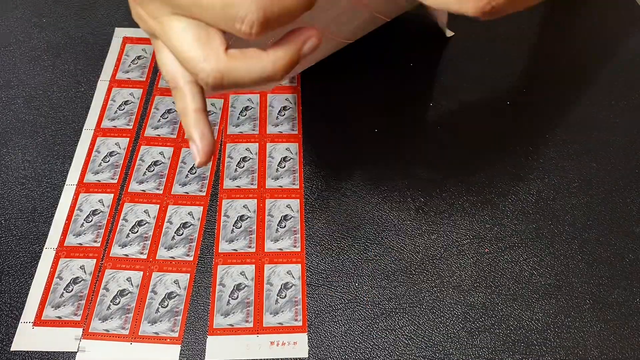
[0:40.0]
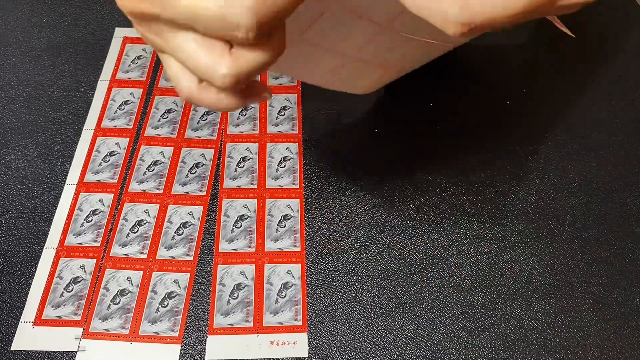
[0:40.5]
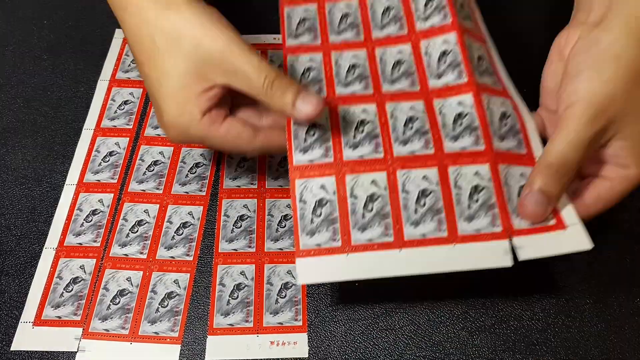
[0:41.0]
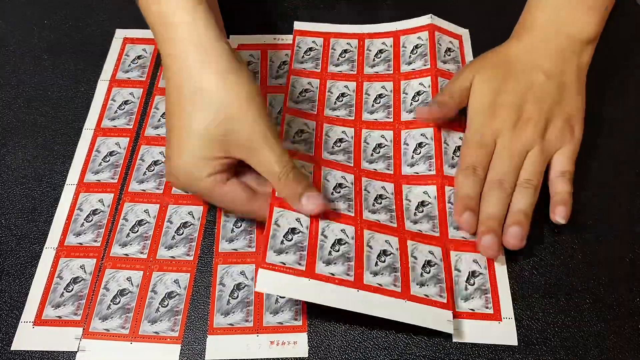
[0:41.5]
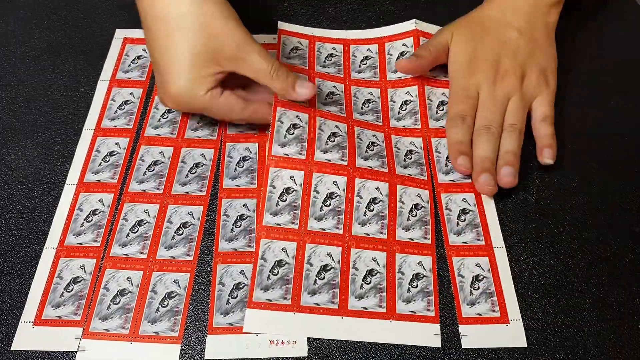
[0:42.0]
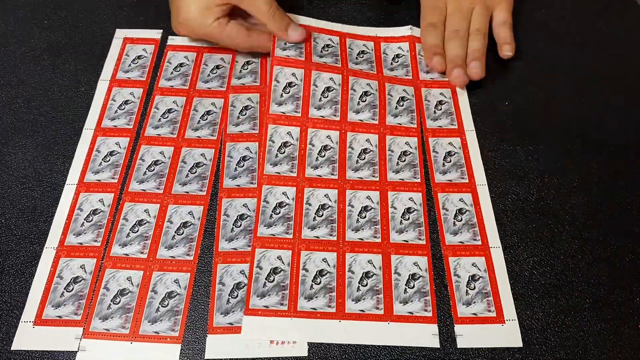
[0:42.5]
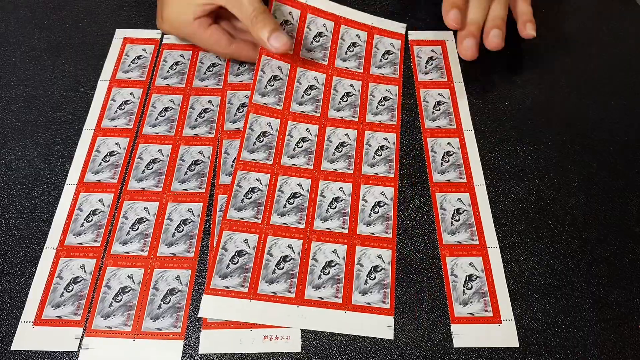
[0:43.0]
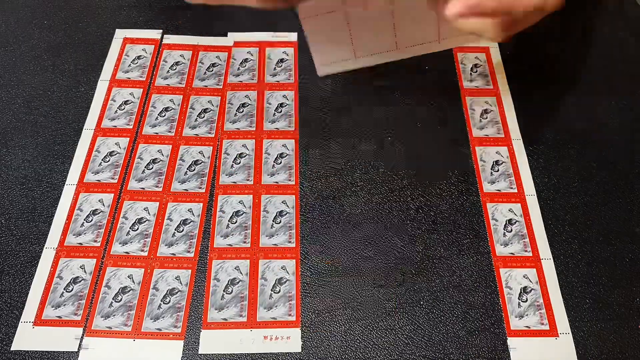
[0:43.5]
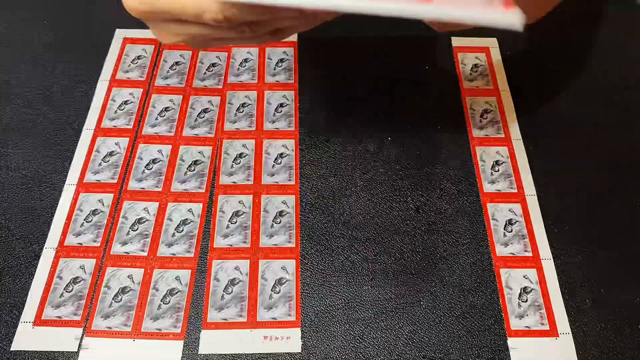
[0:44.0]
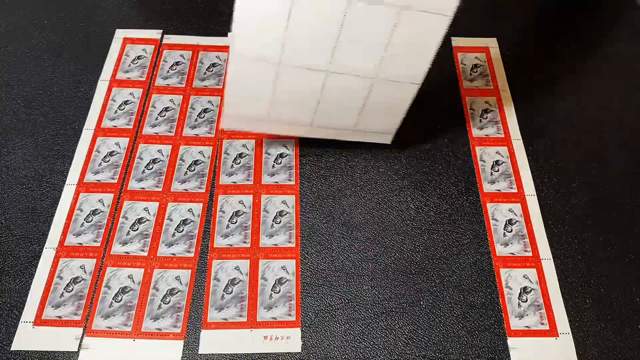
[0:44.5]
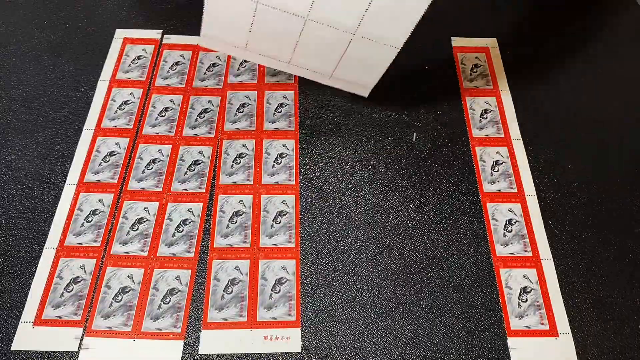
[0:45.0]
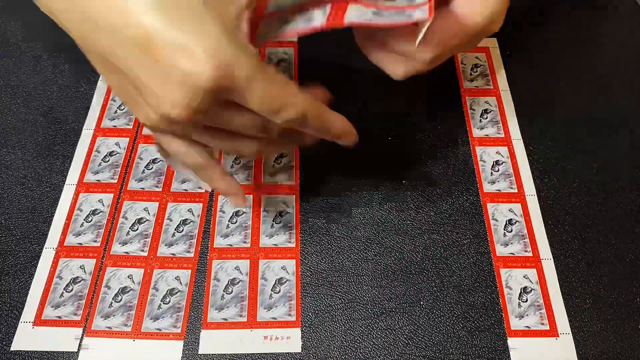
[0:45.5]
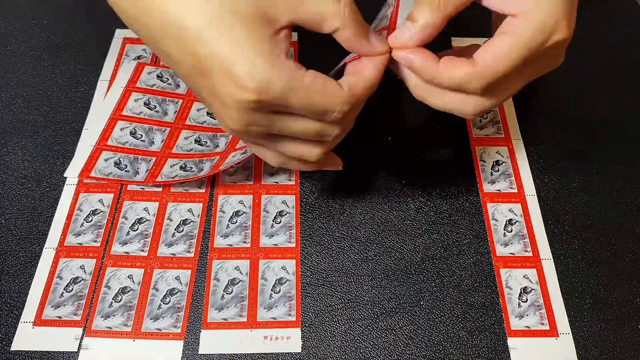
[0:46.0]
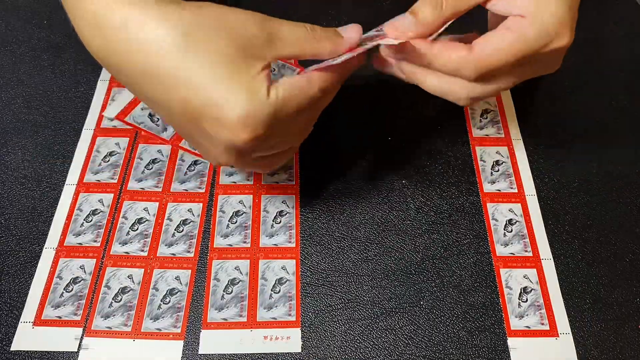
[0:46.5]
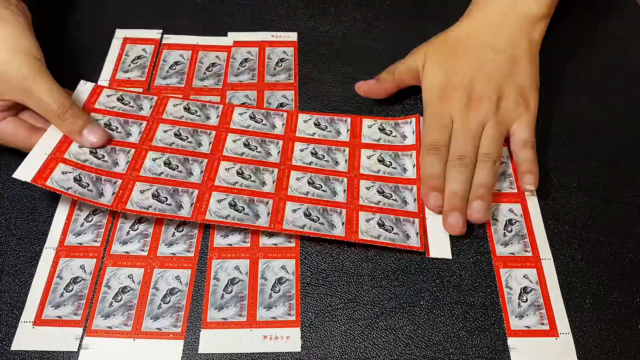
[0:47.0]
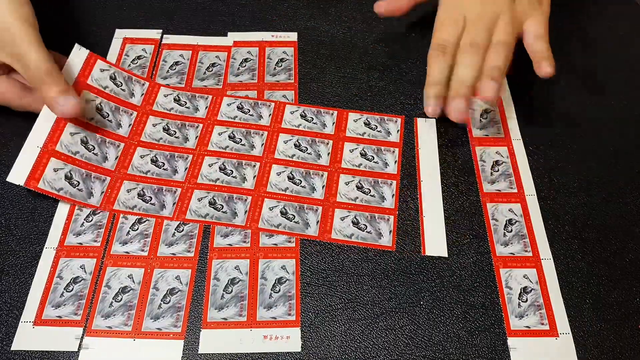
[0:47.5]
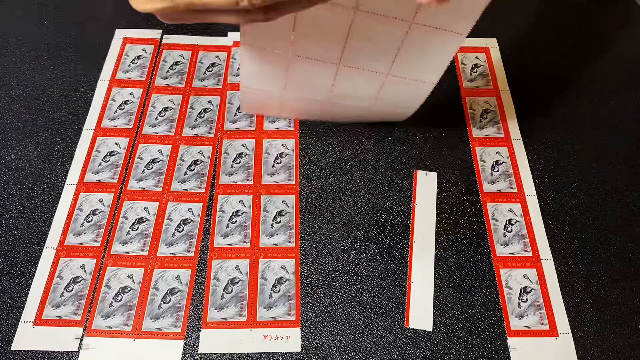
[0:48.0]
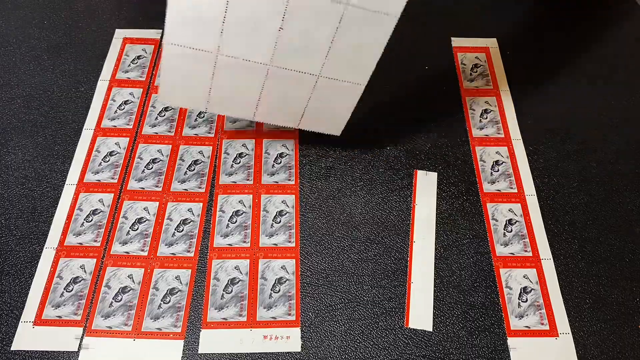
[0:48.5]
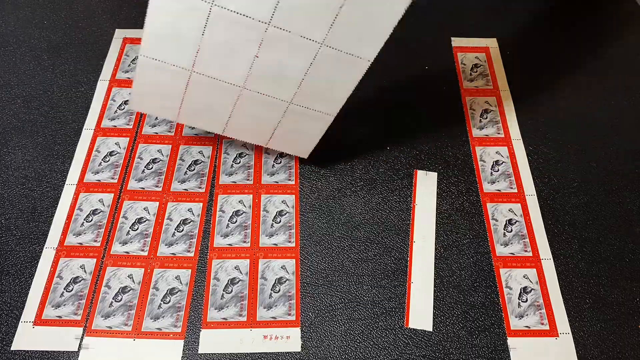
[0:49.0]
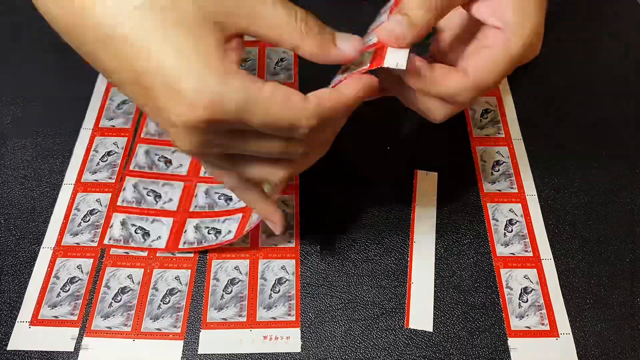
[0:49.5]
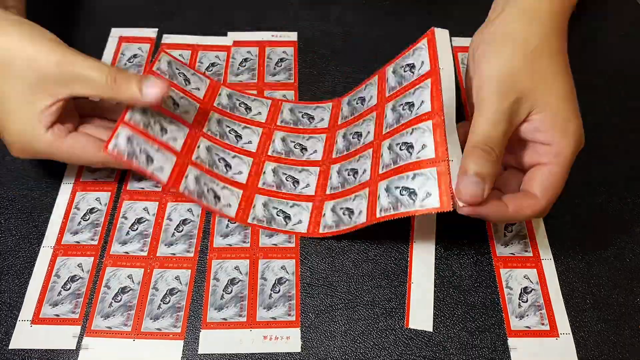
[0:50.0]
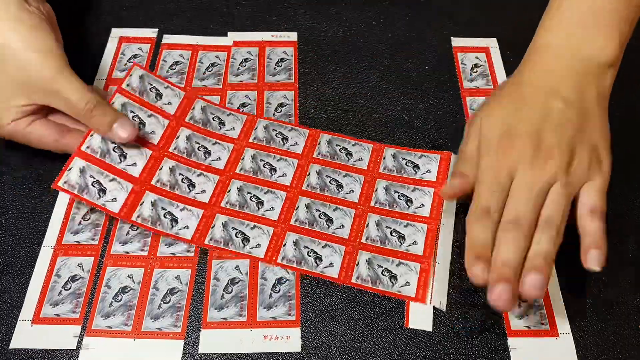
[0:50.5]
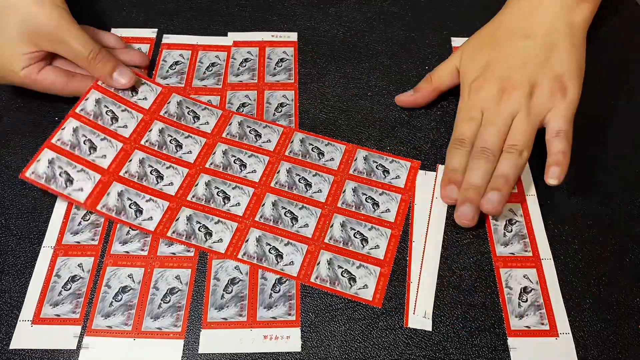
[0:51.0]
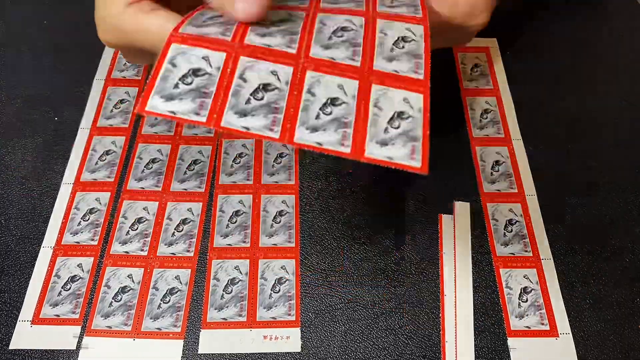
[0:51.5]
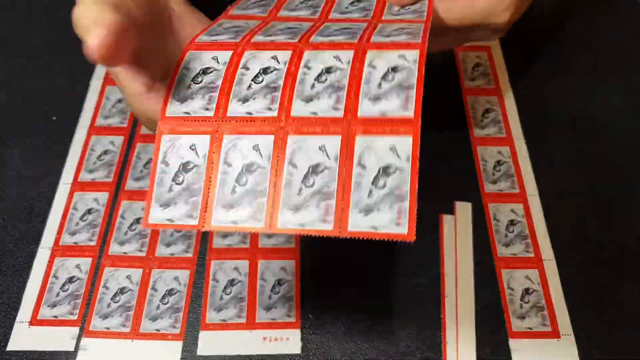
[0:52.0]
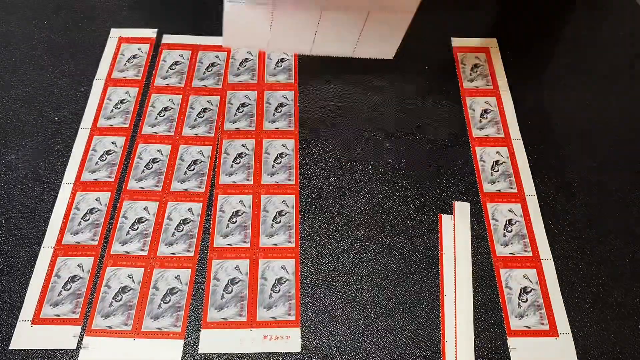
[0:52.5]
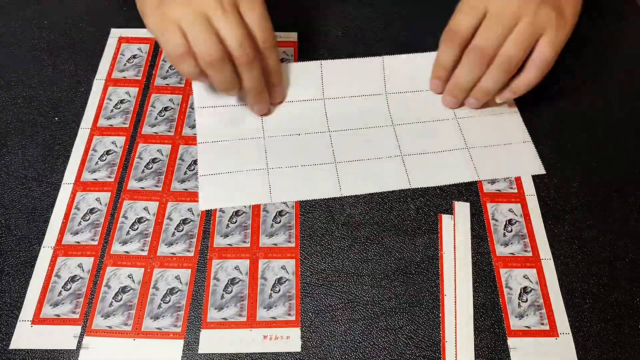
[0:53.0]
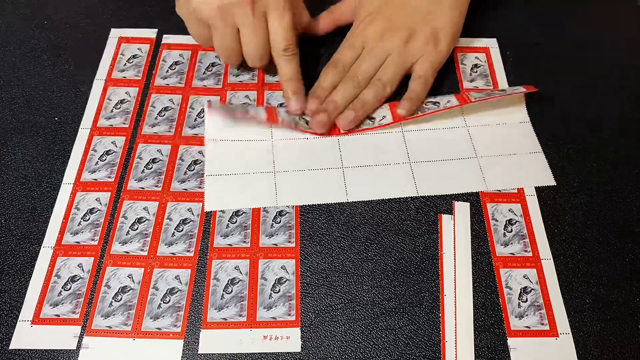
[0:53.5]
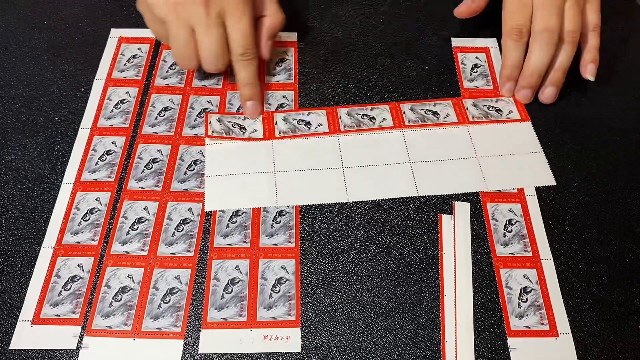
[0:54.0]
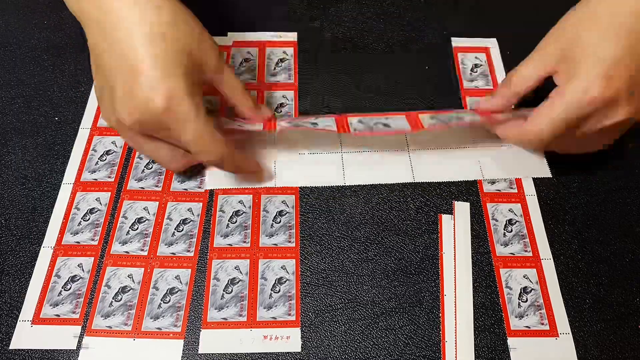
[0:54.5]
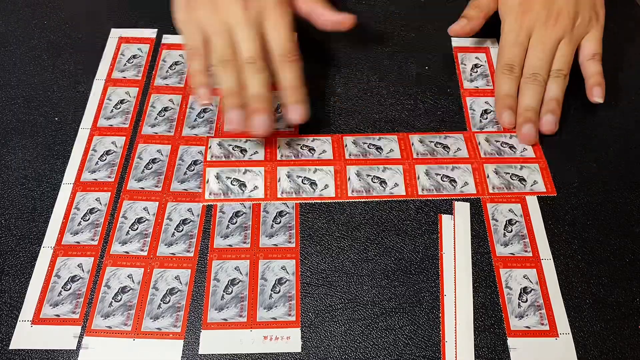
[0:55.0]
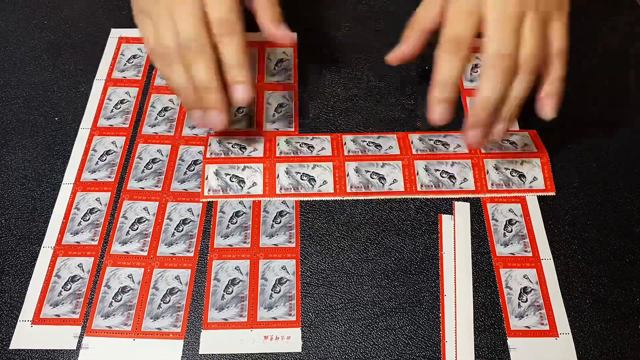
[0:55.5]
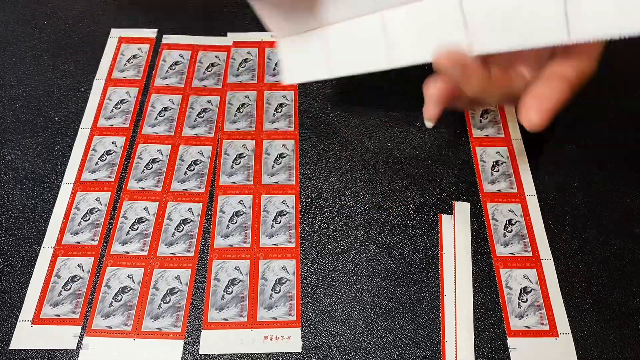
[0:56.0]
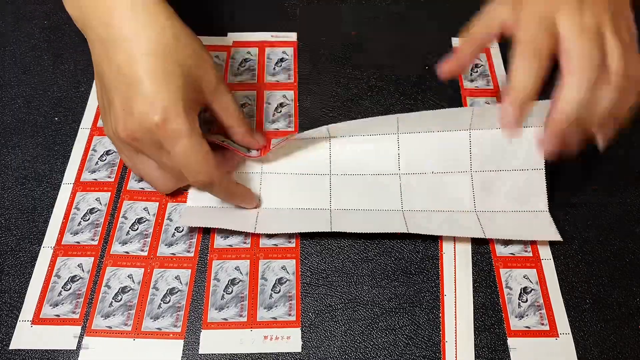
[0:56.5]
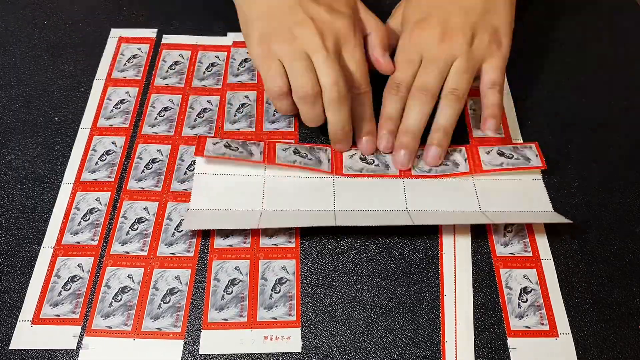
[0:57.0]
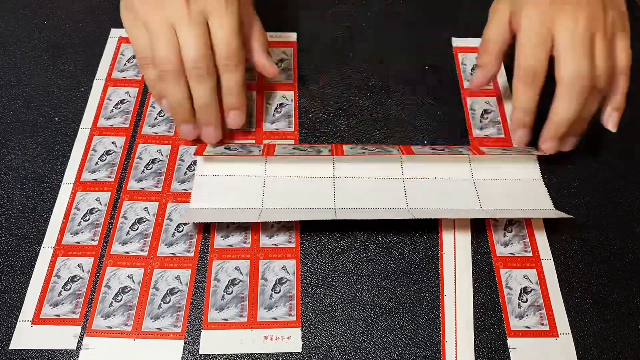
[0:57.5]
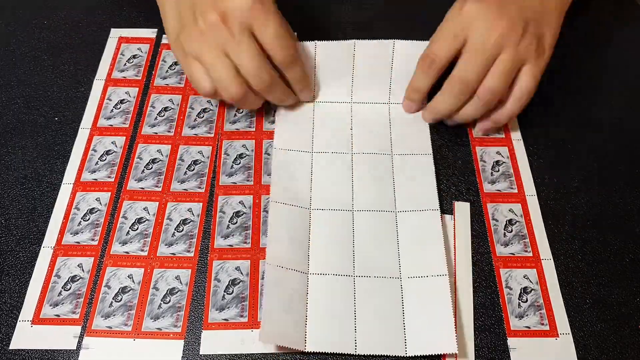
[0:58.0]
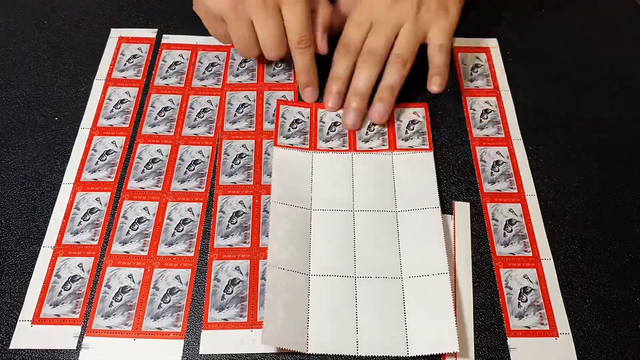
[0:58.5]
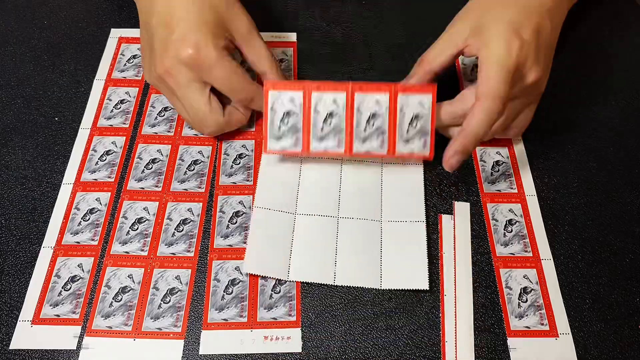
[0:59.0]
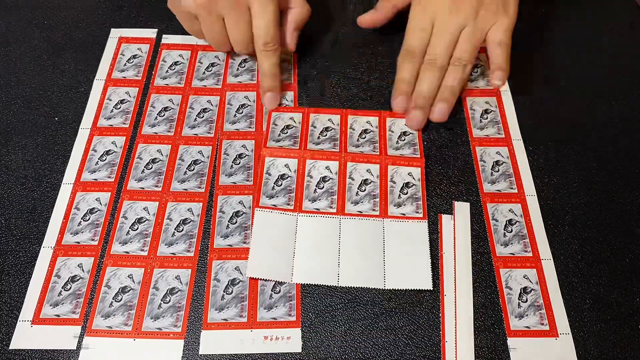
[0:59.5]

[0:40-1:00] The hand takes the larger right piece of paper, which still has 5 columns, and folds it so that the rightmost column is by itself, leaving a bigger 4-unit column piece. He strips the white borders off that 4-unit piece, again folding and then using his hand to create tension to rip the paper. He now has a clean 4 by 5 section of little sectioned-off pieces, each with a red border and an image in the middle. He creases the paper more, dividing it into more sections and unfolding them, preparing to rip them apart as he did with the other parts. He continues to fold and section them.